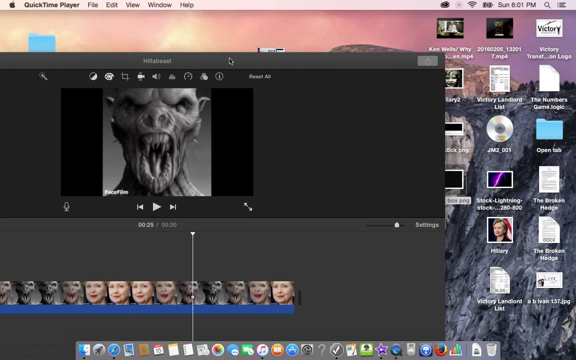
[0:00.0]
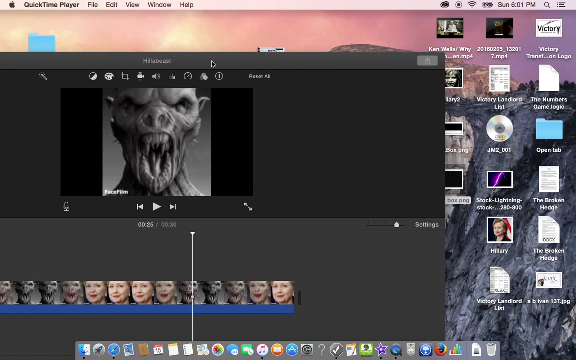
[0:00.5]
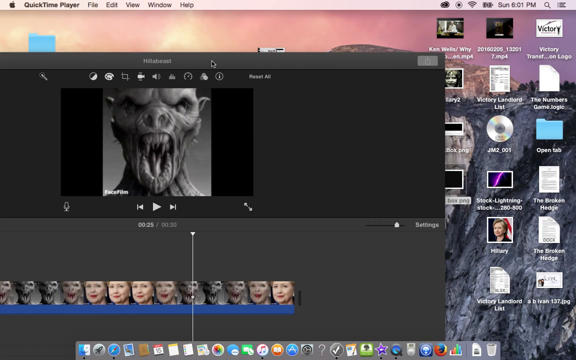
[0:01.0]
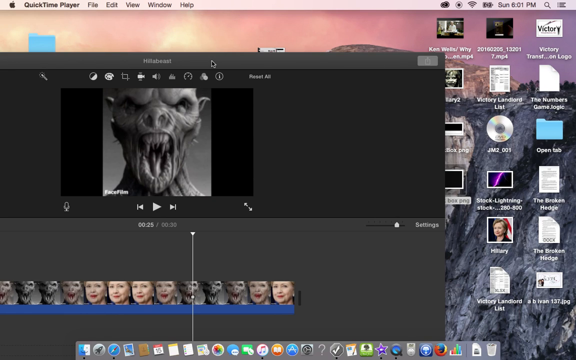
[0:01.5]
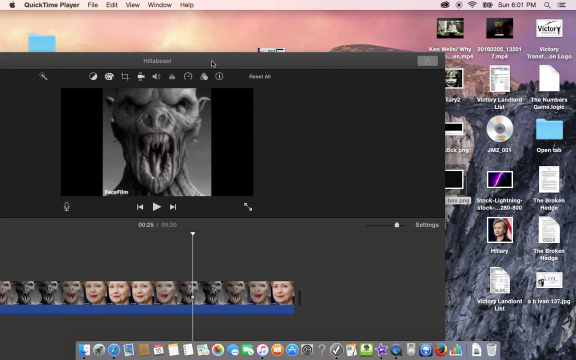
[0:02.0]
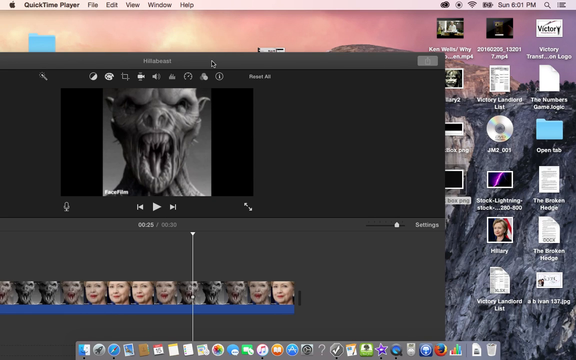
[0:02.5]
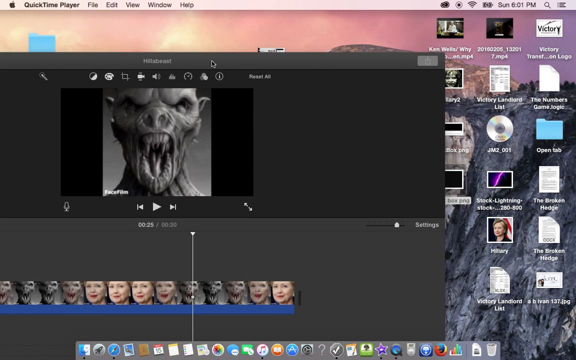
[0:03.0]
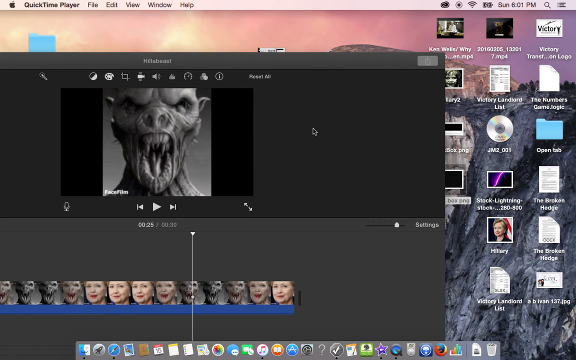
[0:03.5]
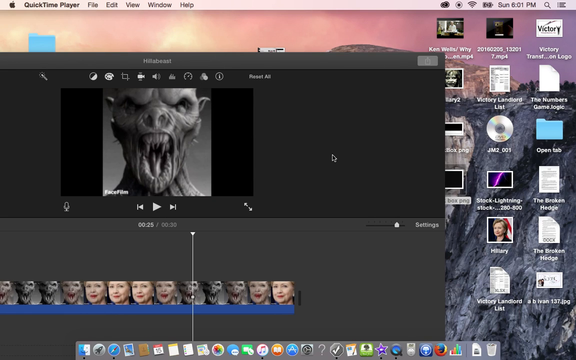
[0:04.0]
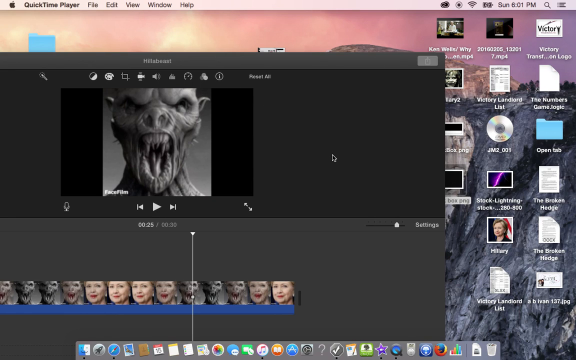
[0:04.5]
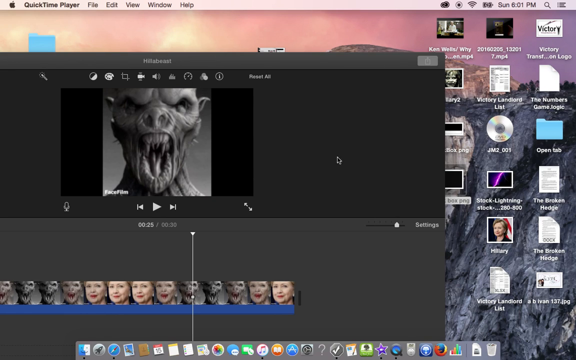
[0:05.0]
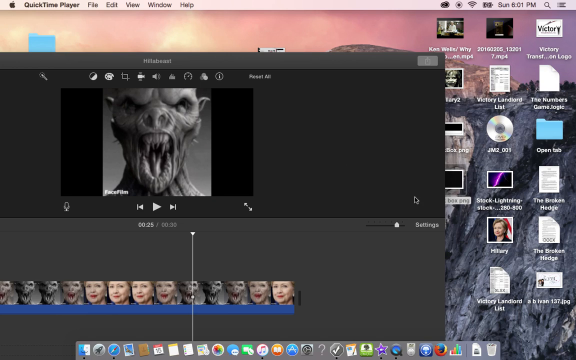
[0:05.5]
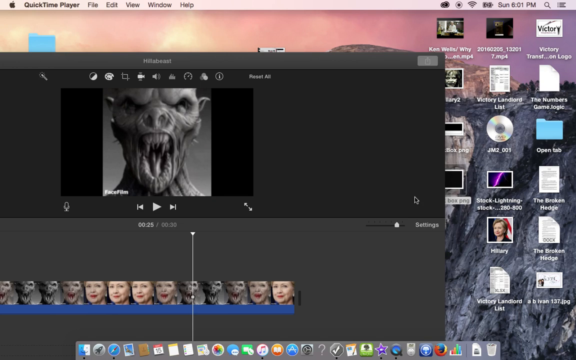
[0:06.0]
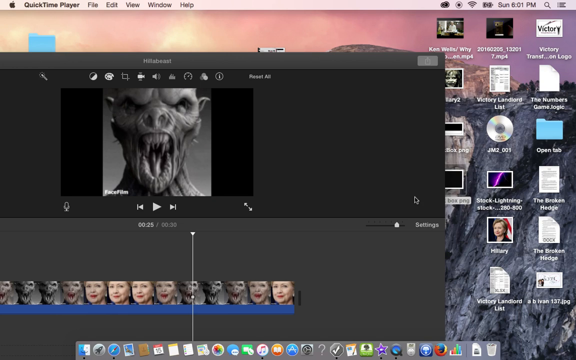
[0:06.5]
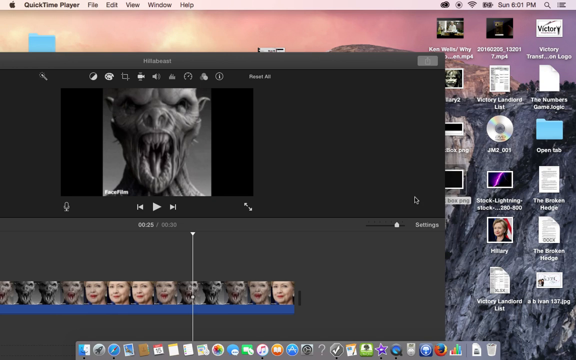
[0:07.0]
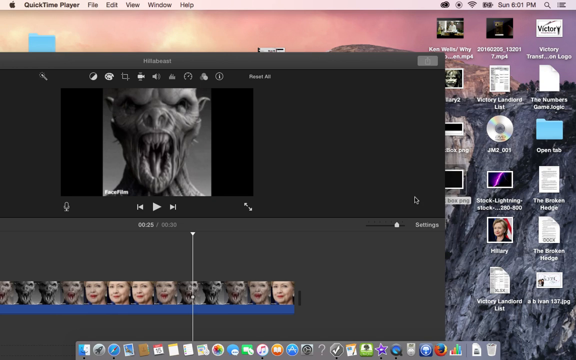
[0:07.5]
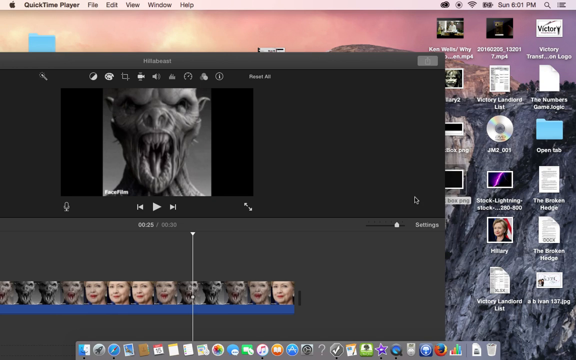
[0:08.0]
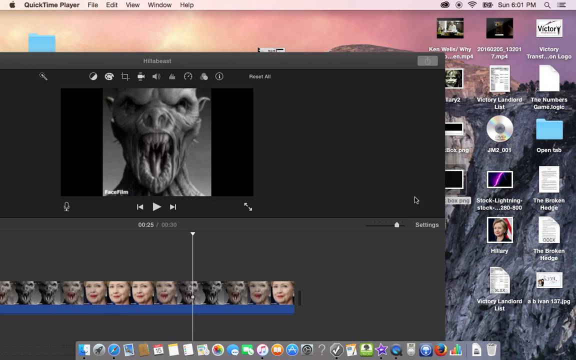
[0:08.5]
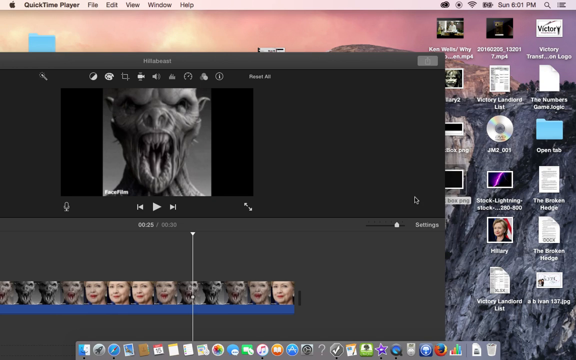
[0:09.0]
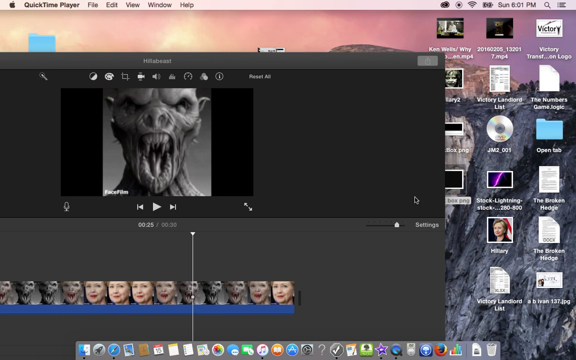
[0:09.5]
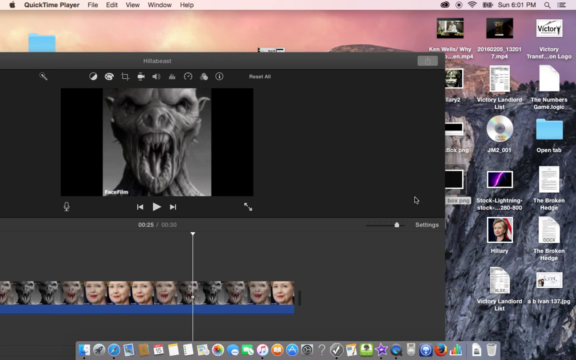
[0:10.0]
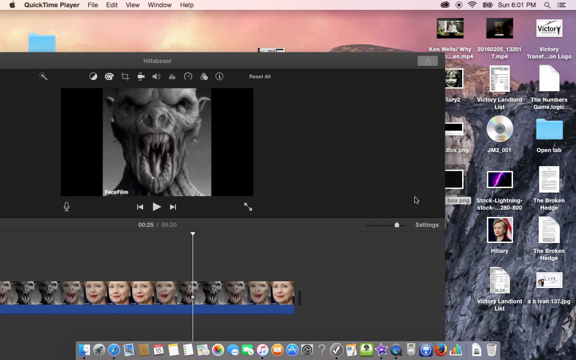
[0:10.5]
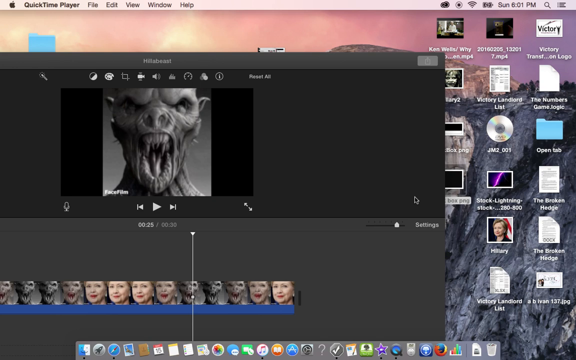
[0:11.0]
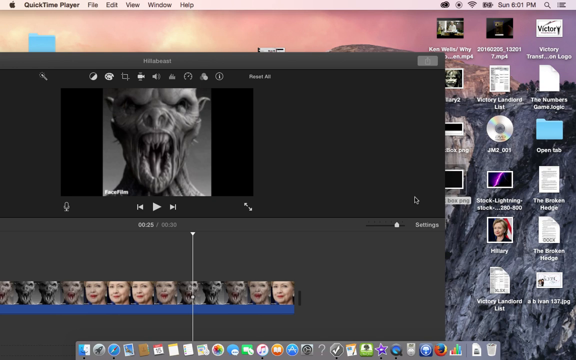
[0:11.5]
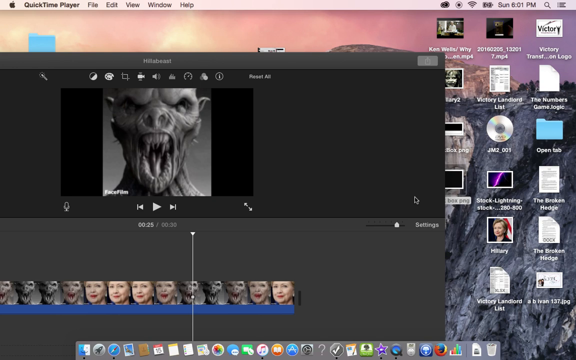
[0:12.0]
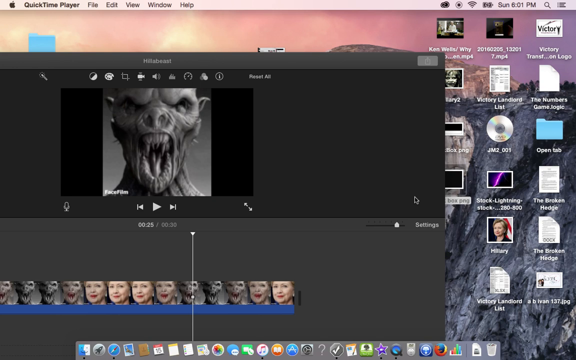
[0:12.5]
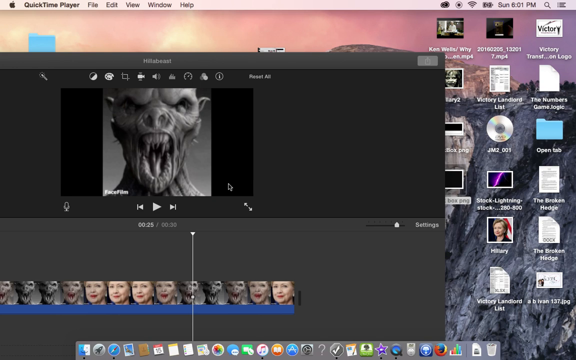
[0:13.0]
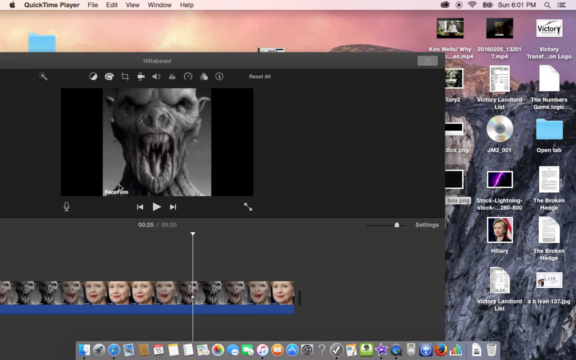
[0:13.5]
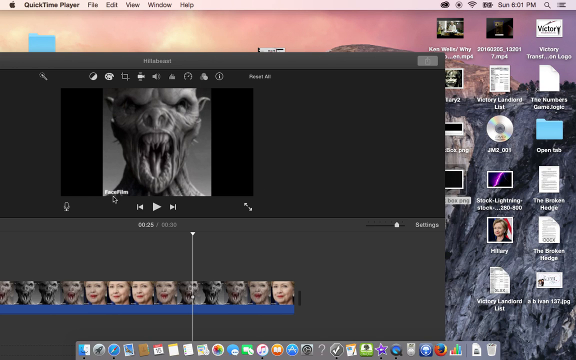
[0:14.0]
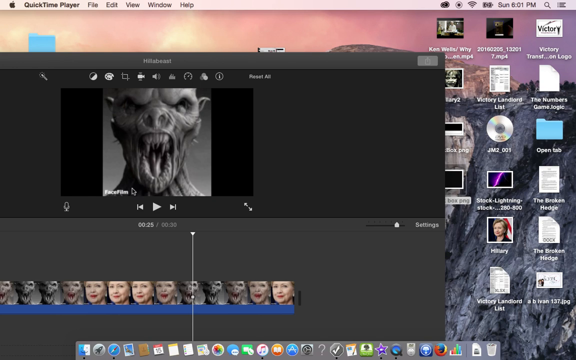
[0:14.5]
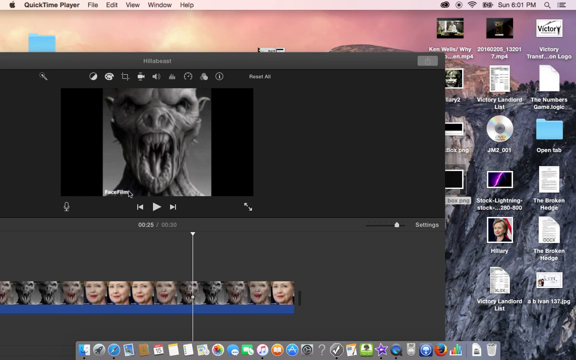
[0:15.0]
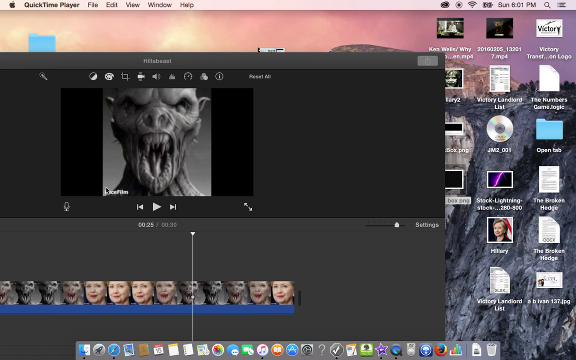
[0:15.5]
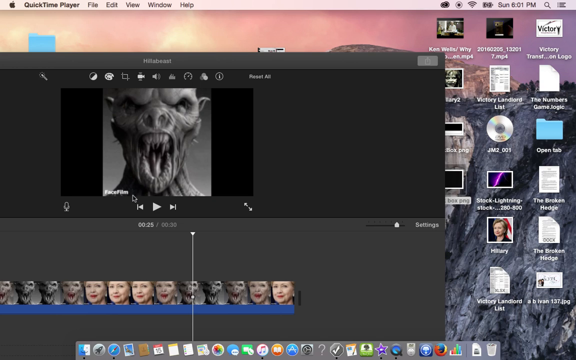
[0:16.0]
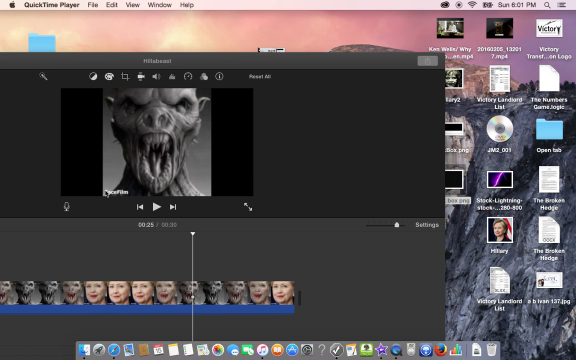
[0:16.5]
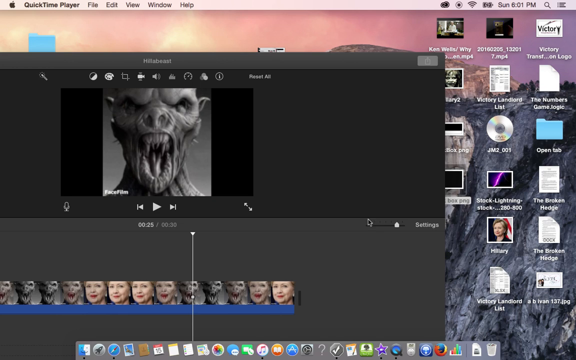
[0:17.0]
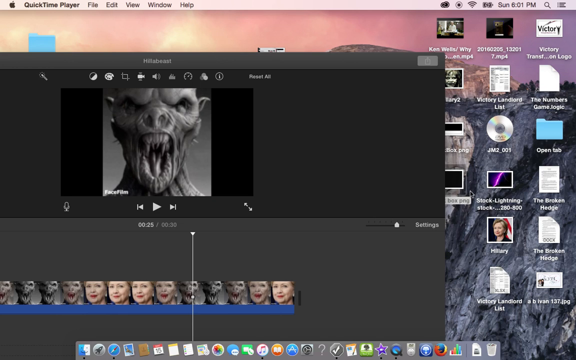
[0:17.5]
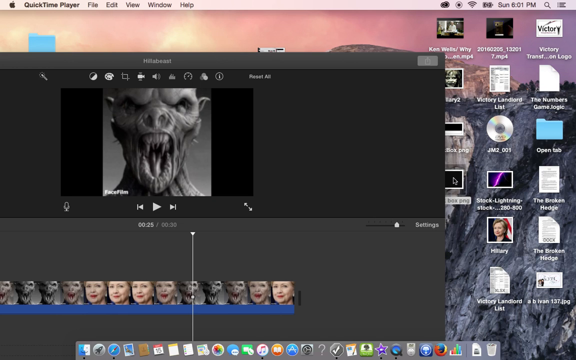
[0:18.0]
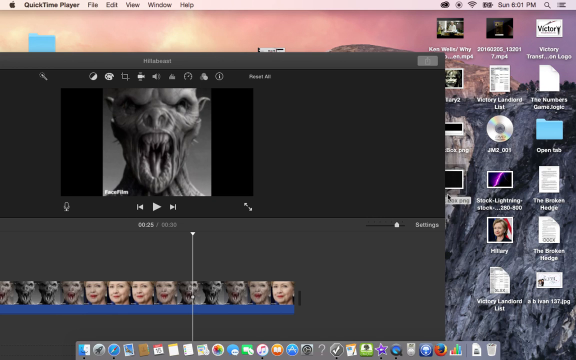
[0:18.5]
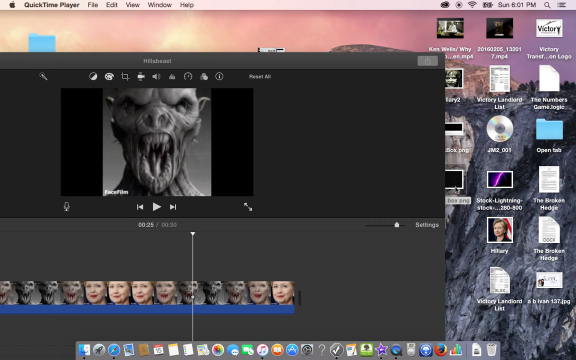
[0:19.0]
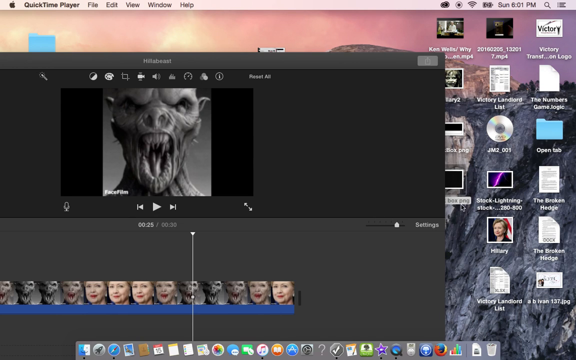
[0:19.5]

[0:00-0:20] A black-and-white picture of a scary creature with a face like a dragon is shown. It has teeth all over its mouth and no tongue, very scary eyes, and a small neck covered in many veins. The picture is on a desktop screen. At the top there is a Wi-Fi indicator, and lower down there is a picture of Hillary Clinton. The word "Victoria" appears in a long list, and there is also text that includes the word "broken". In the top left corner is the Apple logo, along with "QuickTime Player" and the menus File, Edit, View, Windows and Help. The person moves the cursor over the picture and tries to click something.